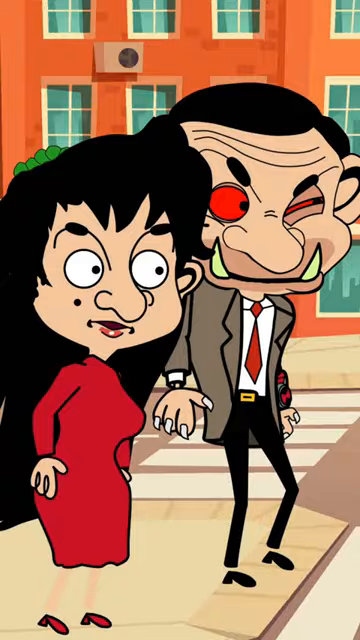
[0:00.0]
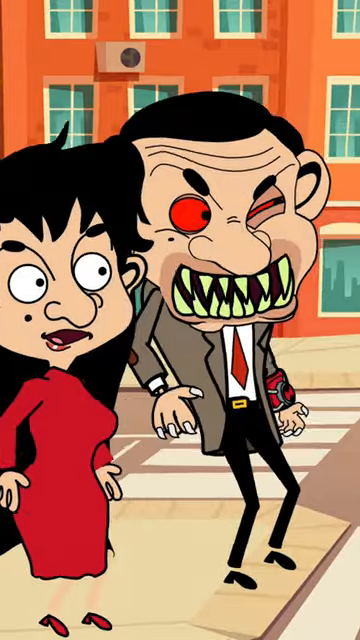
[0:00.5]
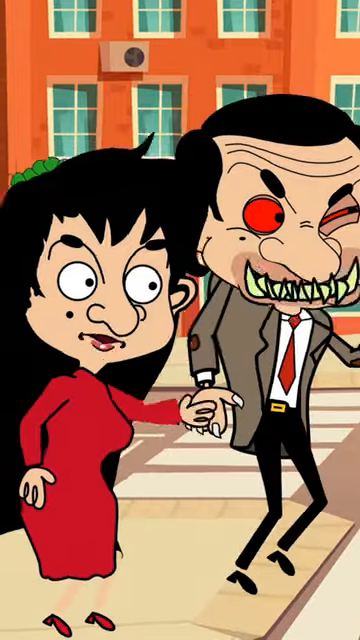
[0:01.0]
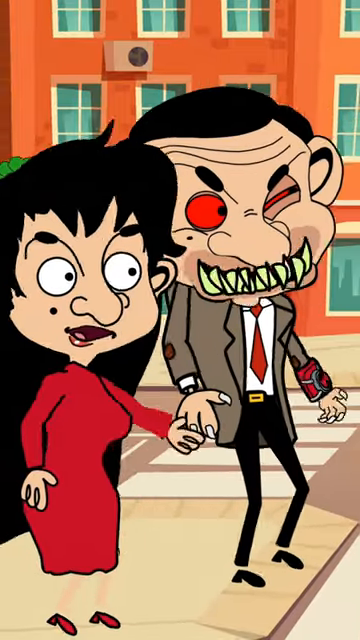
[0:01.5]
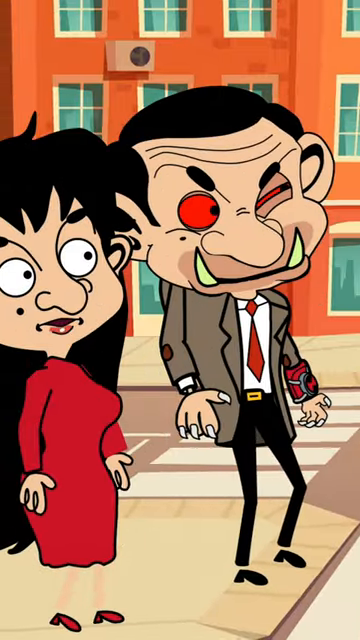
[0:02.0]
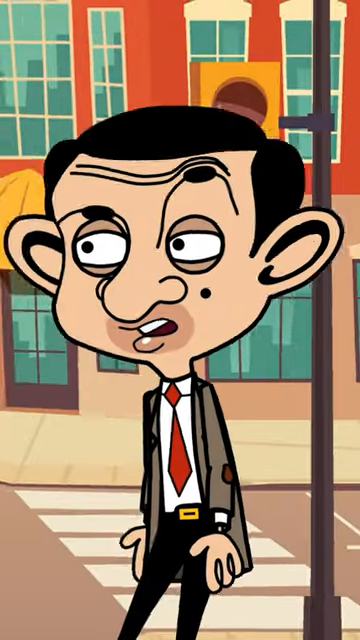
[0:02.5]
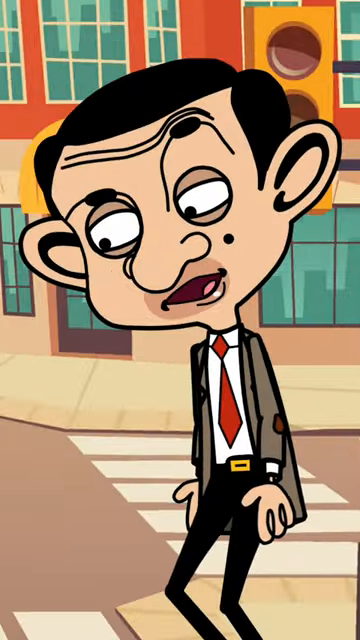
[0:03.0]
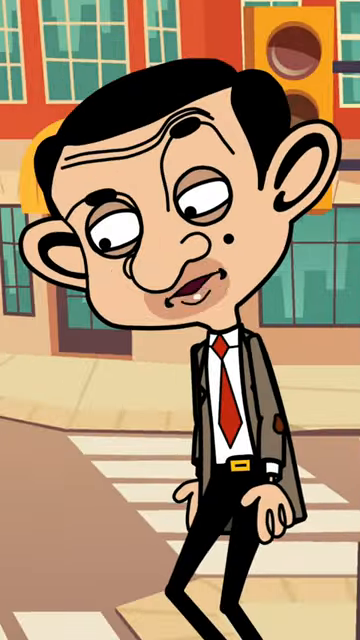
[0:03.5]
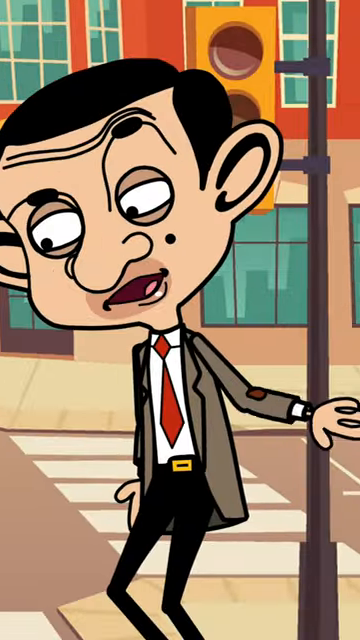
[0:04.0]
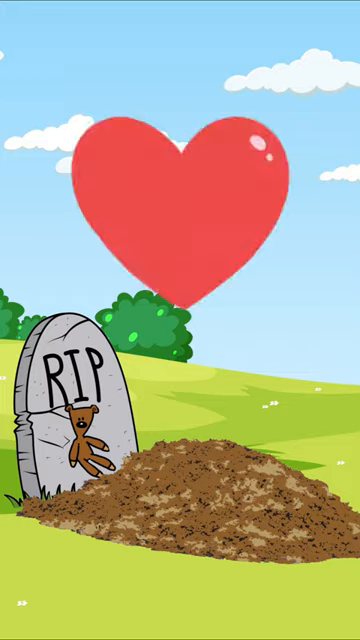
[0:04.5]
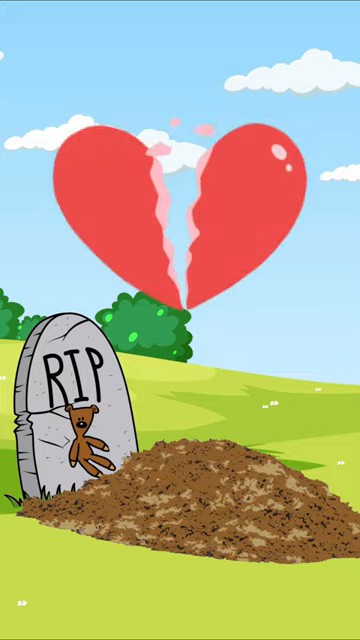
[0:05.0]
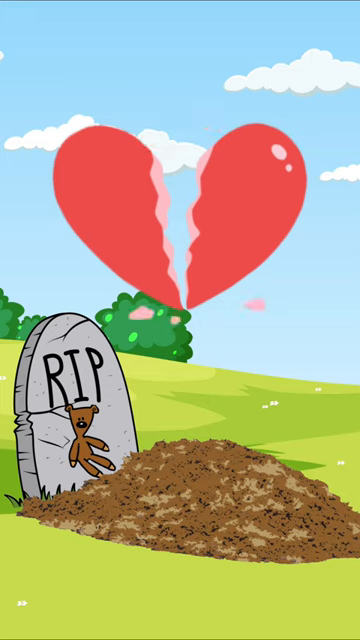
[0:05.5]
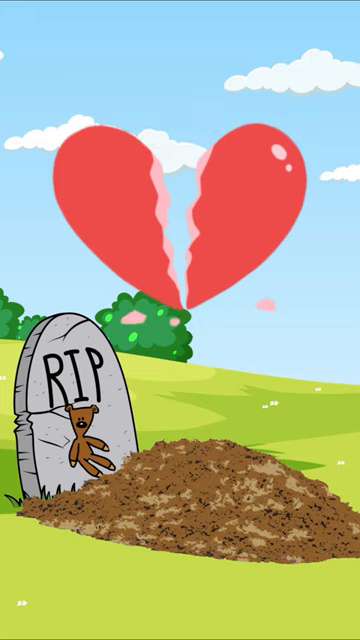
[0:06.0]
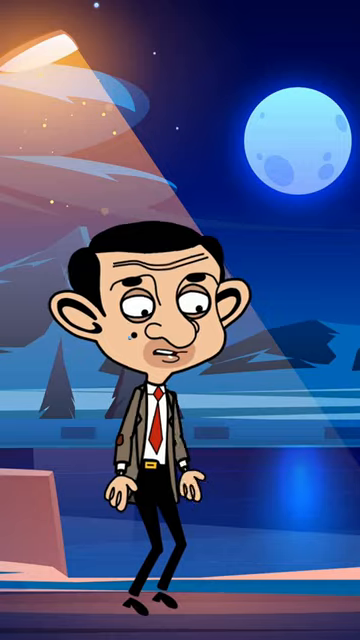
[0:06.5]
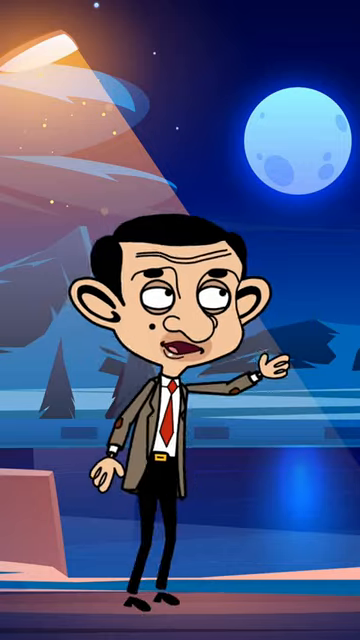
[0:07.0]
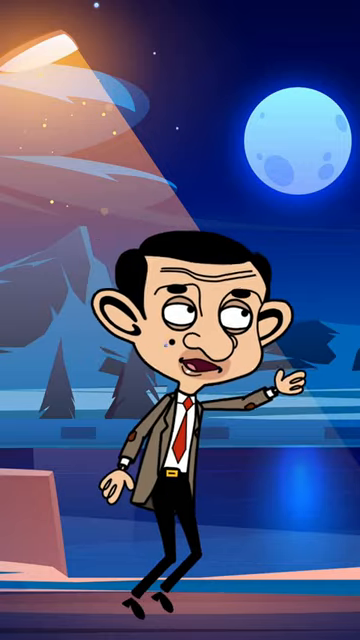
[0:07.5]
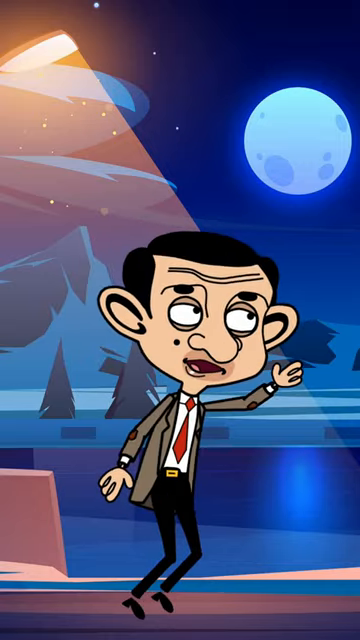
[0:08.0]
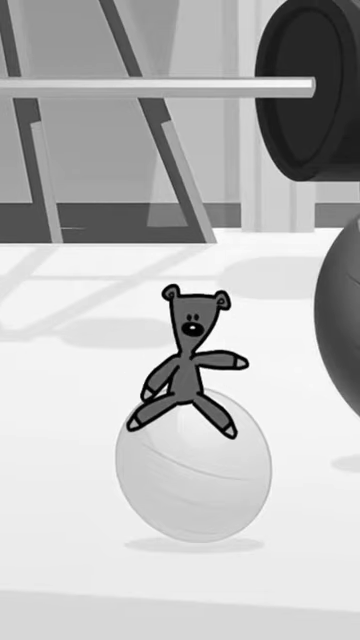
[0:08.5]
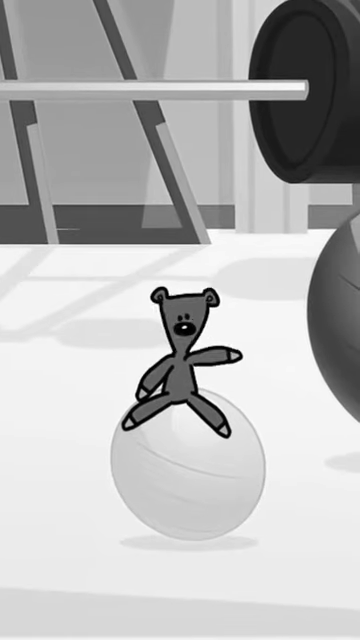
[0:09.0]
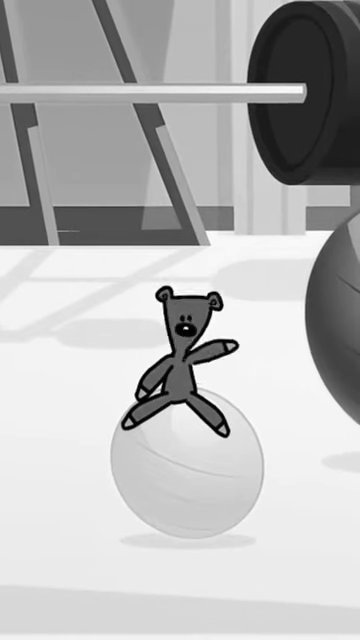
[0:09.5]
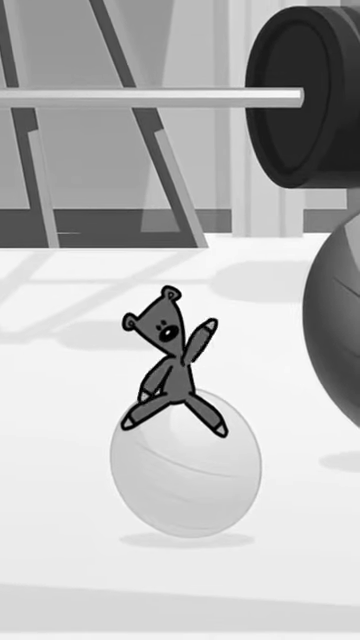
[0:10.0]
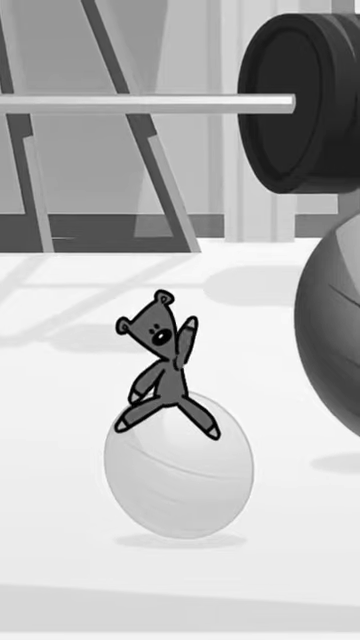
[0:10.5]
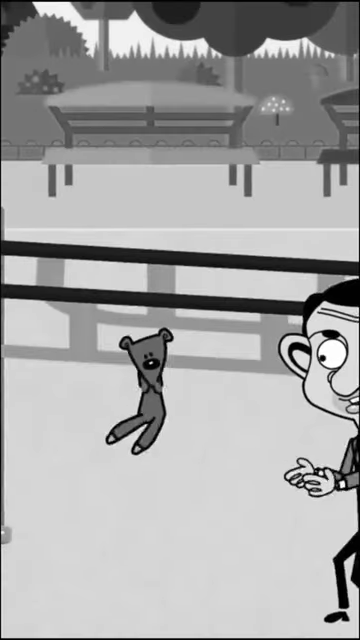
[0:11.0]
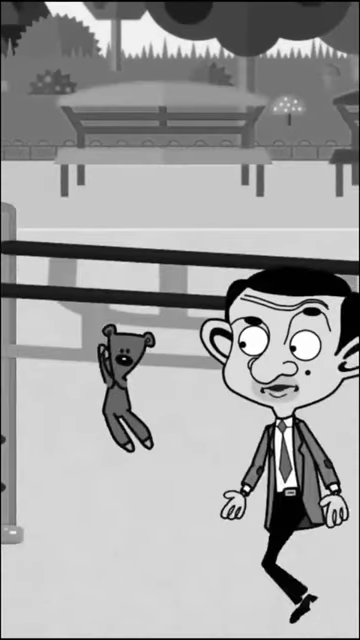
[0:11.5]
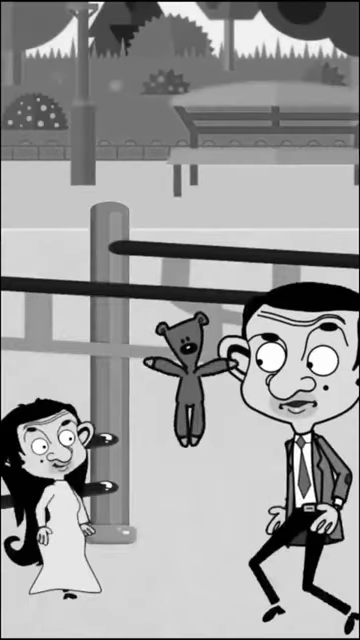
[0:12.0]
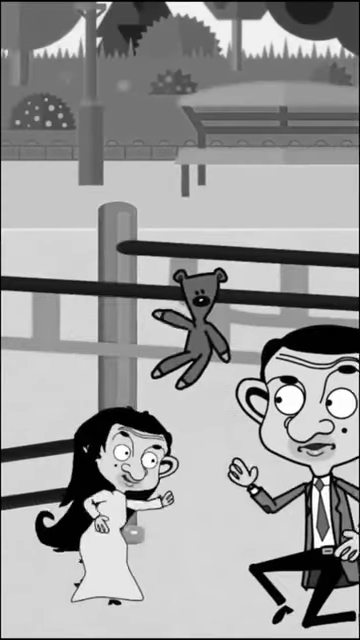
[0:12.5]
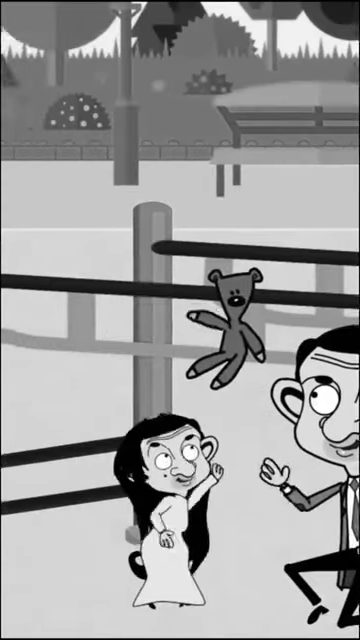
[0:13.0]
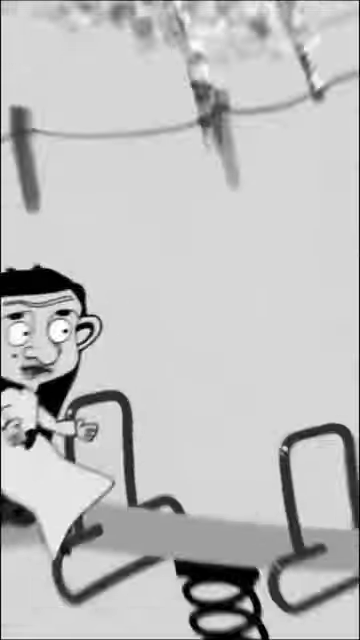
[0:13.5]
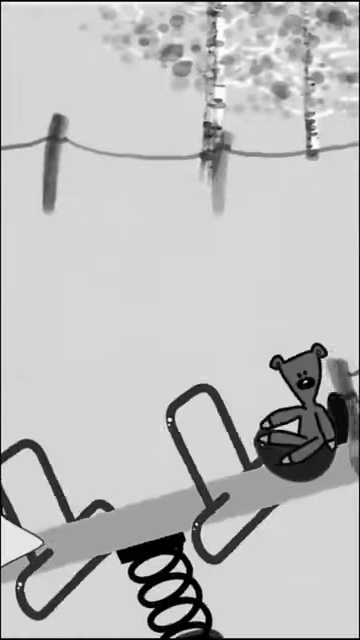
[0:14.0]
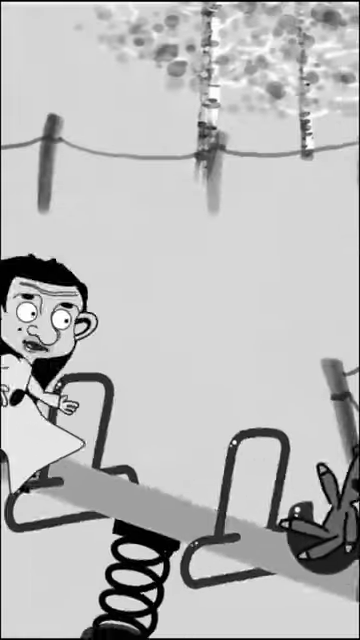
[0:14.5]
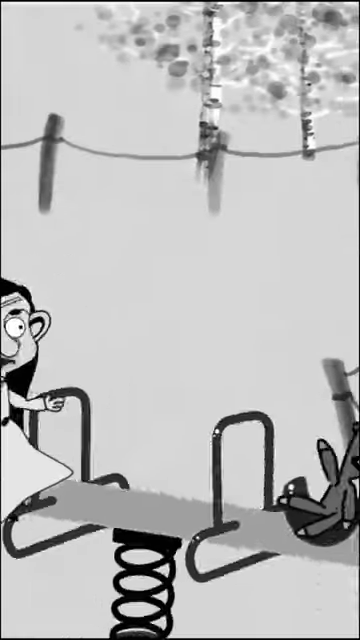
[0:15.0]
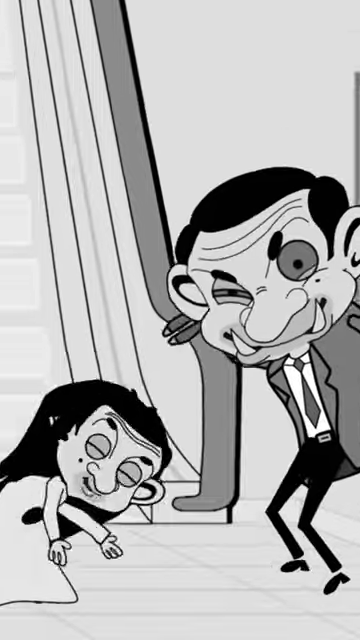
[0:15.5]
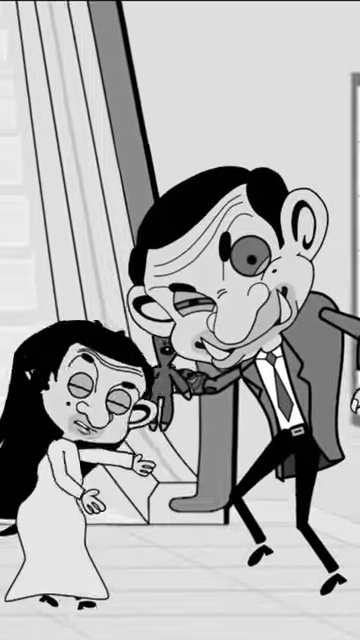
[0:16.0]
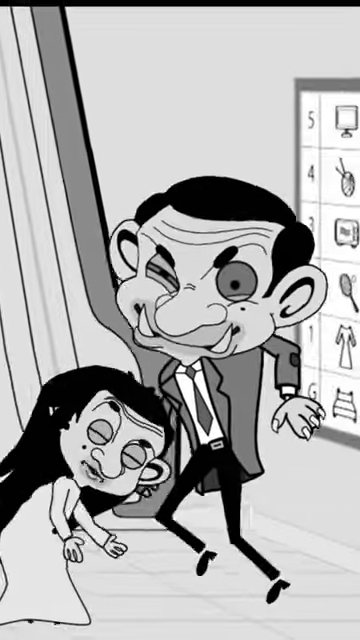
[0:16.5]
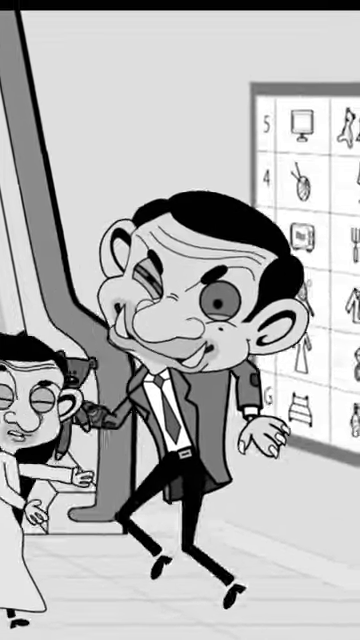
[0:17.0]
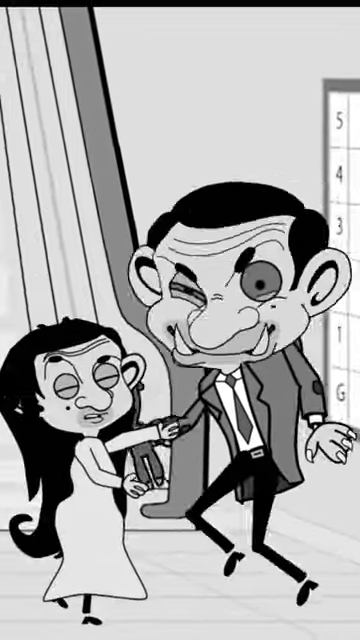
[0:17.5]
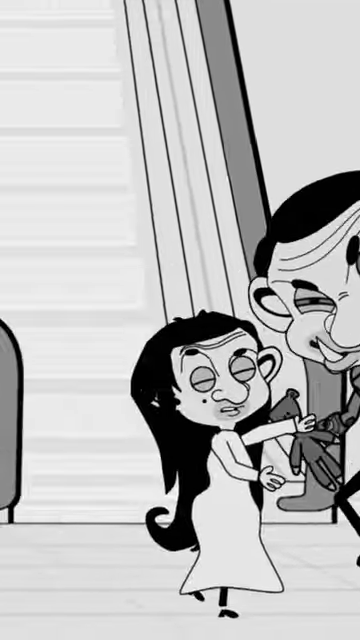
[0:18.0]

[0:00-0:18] This animated cartoon features Mr. Bean, done in 2D animated art. It opens with what looks like an evil Mr. Bean: he has a red eye on the right side of his face, his other eye is closed a little, and fangs come out of his mouth to make him look evil. He walks down the street with a woman in a red dress, then opens his mouth to show a mouthful of devil or demon teeth. The camera shifts to in front of the two, revealing a nicer version of Mr. Bean wearing just a suit, who points behind him. The scene shifts to a graveyard with a tombstone that says "RIP", with a little teddy bear shown underneath the "RIP" and a dirt mound in front of the tombstone. A heart in the center of the screen breaks. Mr. Bean is then out at a lake, crying and looking up at the moon above the ocean. Next, a teddy bear on some sort of ball, in what looks to be a kitchen of some sort, looks at the camera and waves. Mr. Bean is then outside with the teddy bear, which floats in the air toward the left side of the screen while Mr. Bean follows it. The bear leads on to a little girl, who sees the bear and reaches up for it. The scene shifts to a playground where the little girl and the bear go back and forth on a seesaw, and finally the little girl dances with Mr. Bean and the teddy bear.